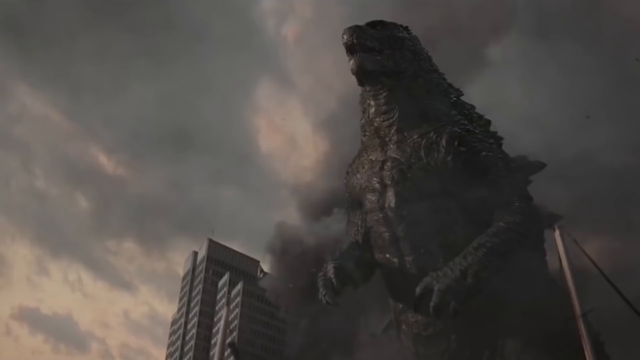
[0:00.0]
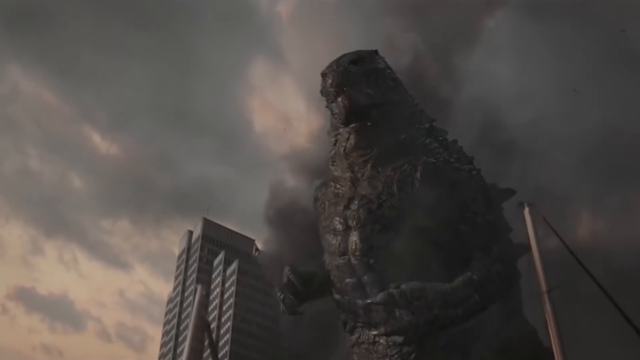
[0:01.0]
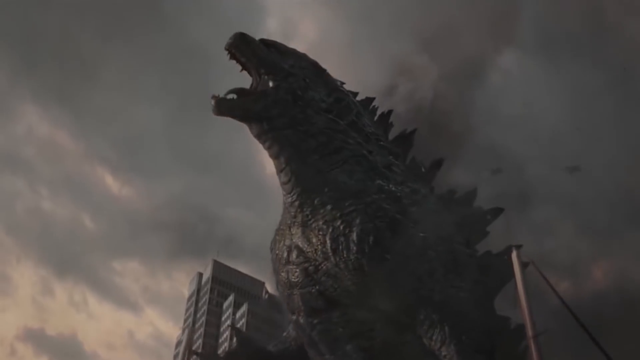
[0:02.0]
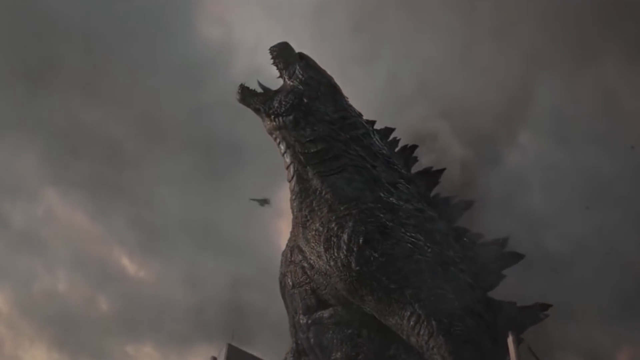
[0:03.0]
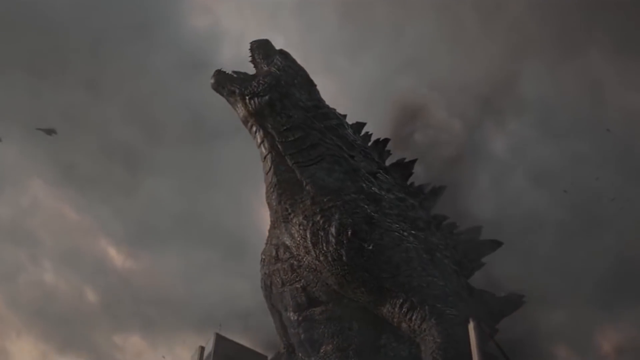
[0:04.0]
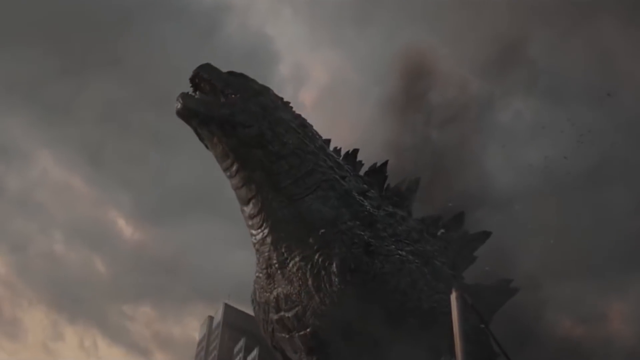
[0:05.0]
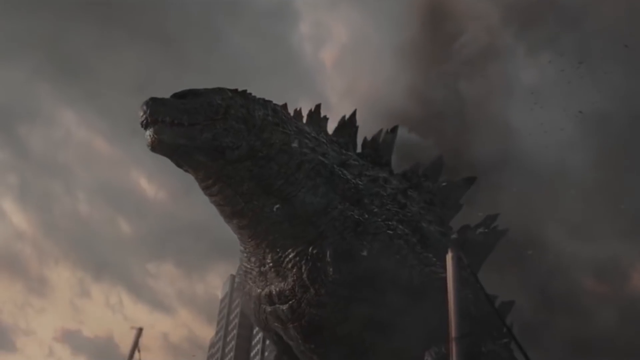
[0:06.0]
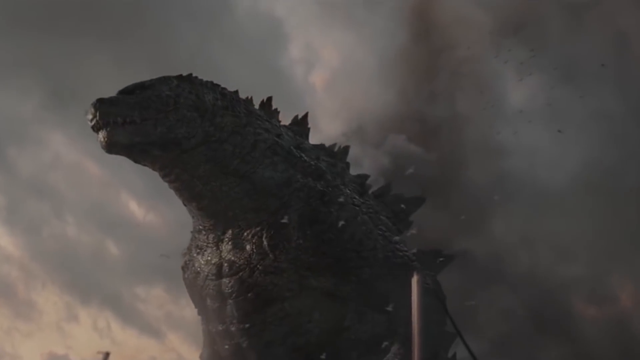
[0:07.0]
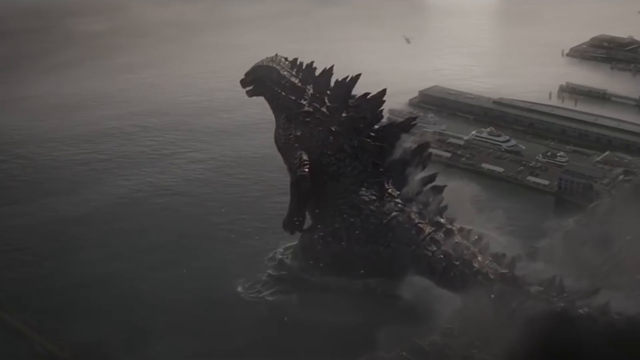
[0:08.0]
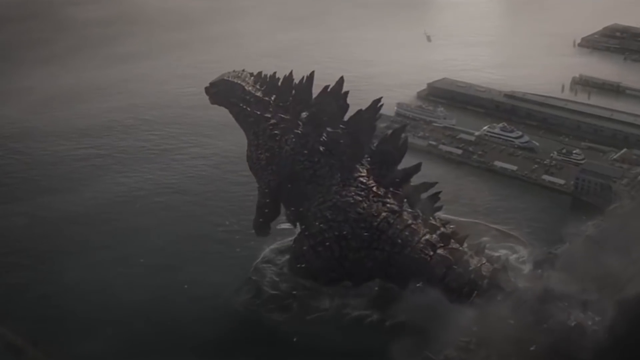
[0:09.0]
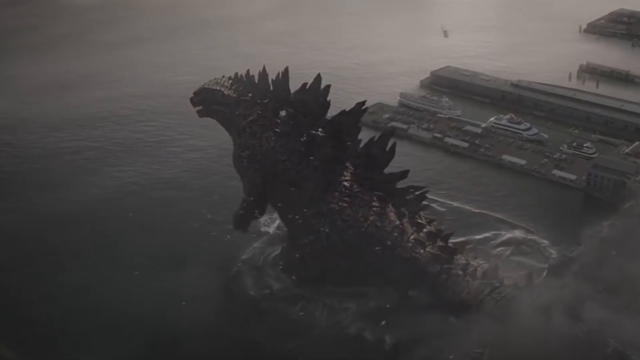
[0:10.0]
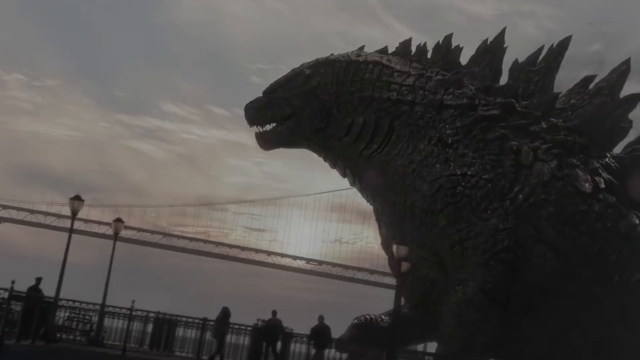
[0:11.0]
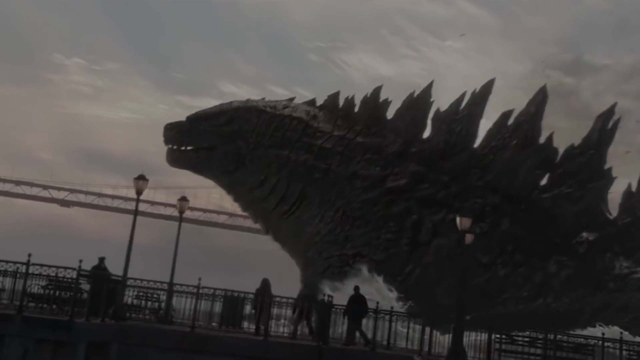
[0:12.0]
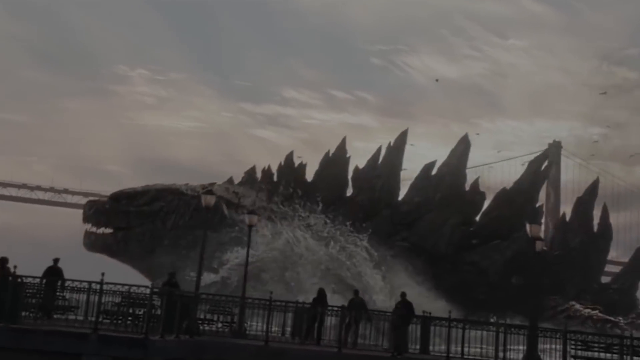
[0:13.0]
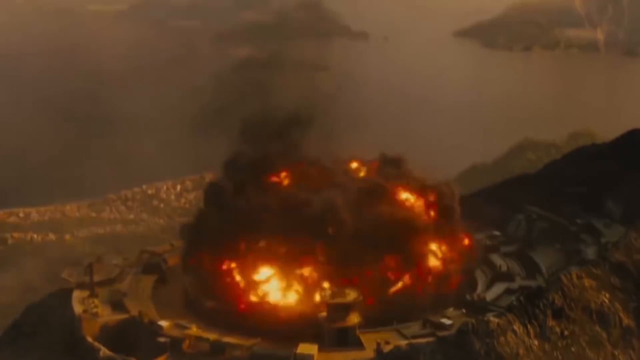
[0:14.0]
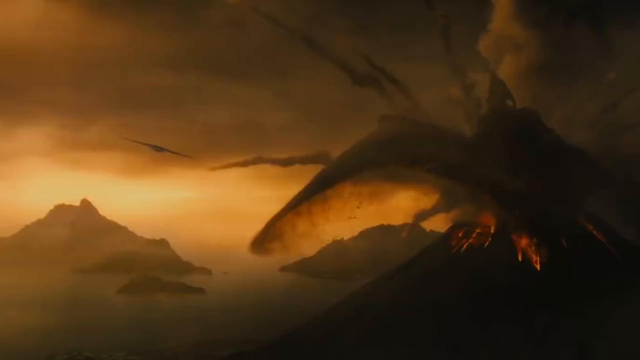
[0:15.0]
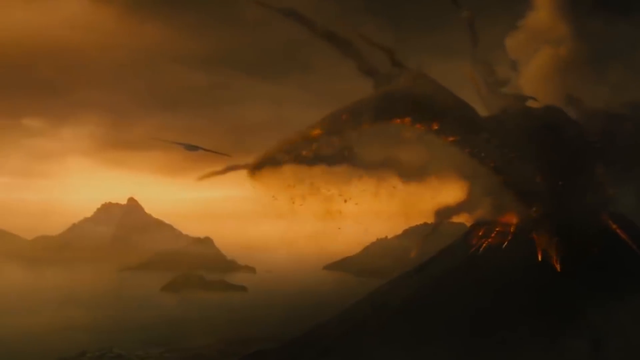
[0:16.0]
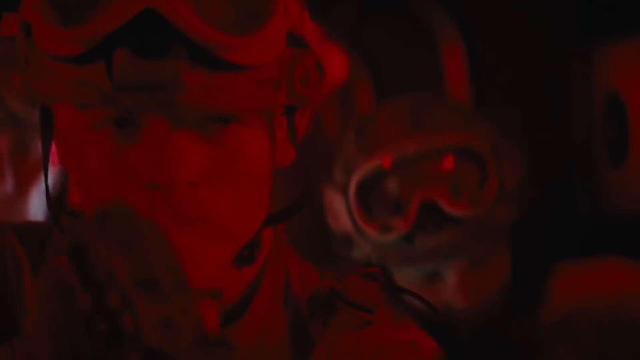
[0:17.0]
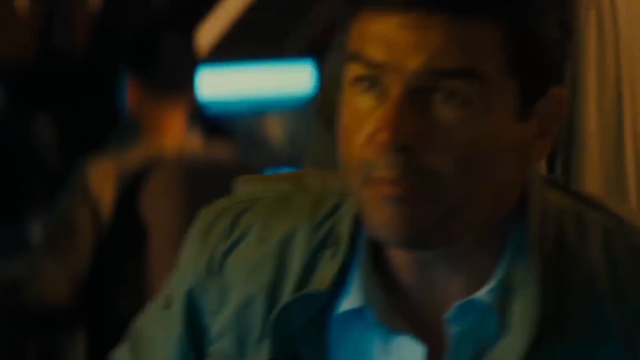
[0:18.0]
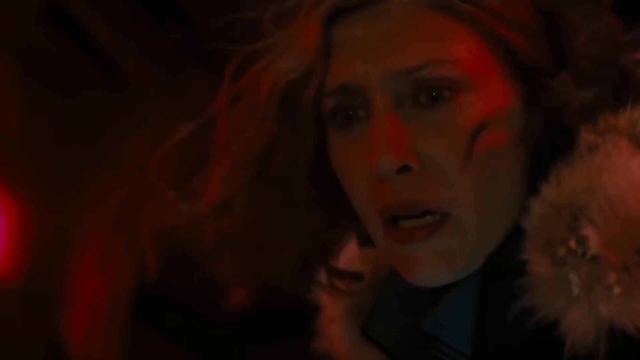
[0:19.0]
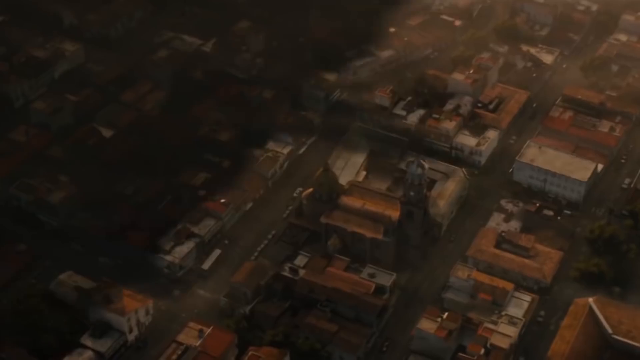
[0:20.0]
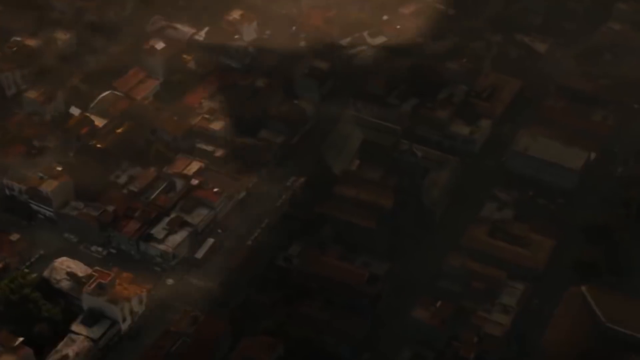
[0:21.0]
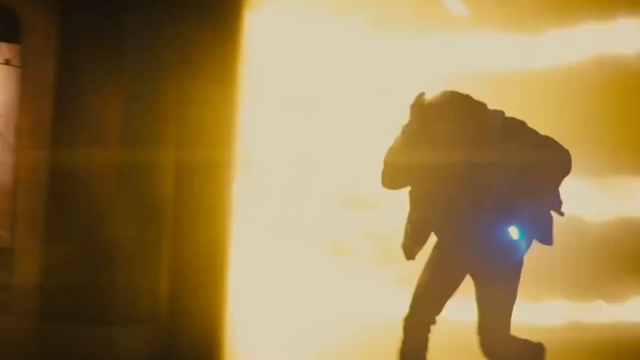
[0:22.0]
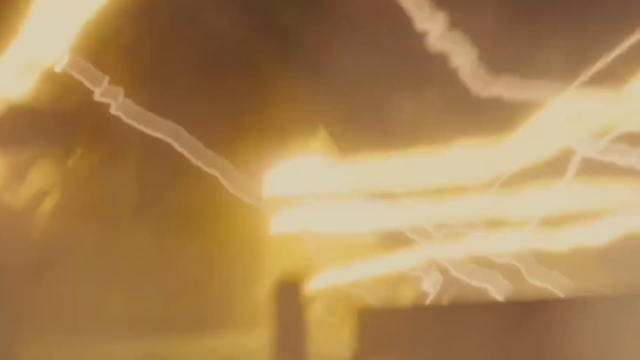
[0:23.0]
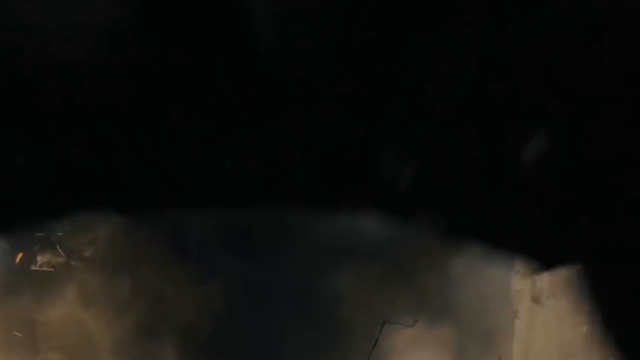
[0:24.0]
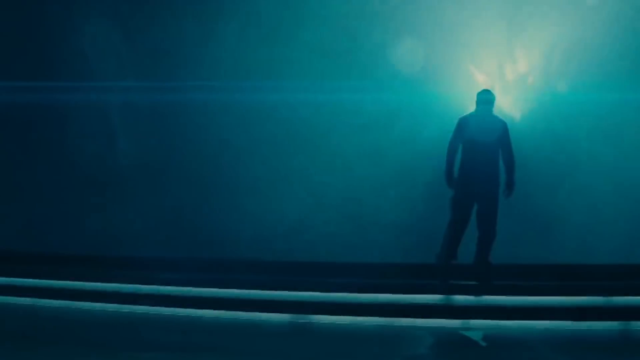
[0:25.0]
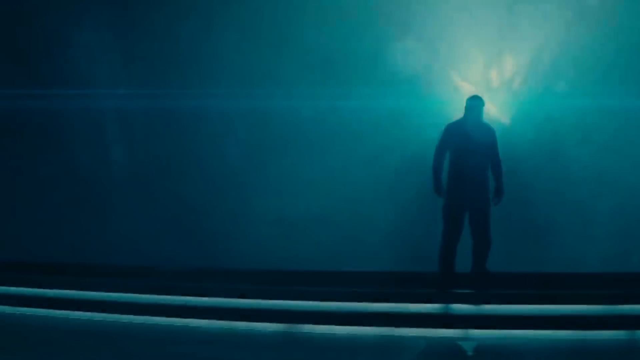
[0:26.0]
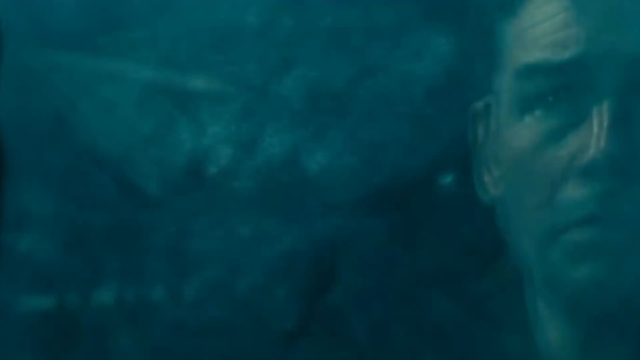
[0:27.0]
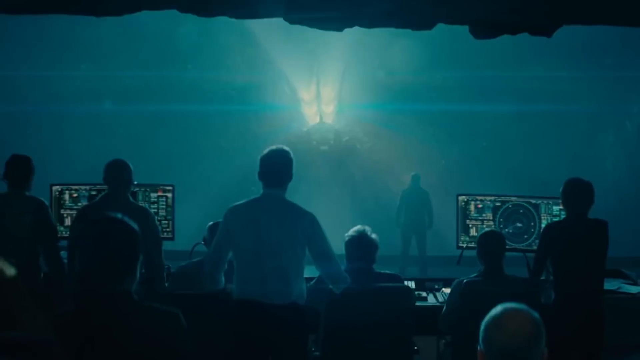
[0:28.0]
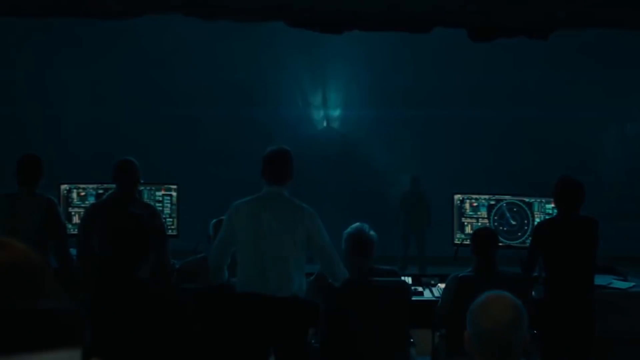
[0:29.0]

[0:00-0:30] A monster that looks like Godzilla is black, with what looks like very tough skin on its back and irregularities resembling mountain ridges. The creature, which is in the water, appears to be screaming as fighter jets fly by from the left to the right side of the screen. Next to it is a harbor with ships and a white cruise ship. The video then switches to an explosion happening at a distance on a street in a city. On the left is a white two-story building and on the right is another two-story building; the buildings have multiple windows. The explosion sends black smoke into the sky. Next comes a volcanic eruption sending black ash into the sky, followed by the shadow of a huge bird flying across the city. A woman appears to be praying. An armored vehicle breaks open or crashes. Against a blue background, a white man is shown with his reflection in a mirror. Multiple people are in what looks like a control room, and one of them, wearing a white shirt, is standing up in front of a computer.